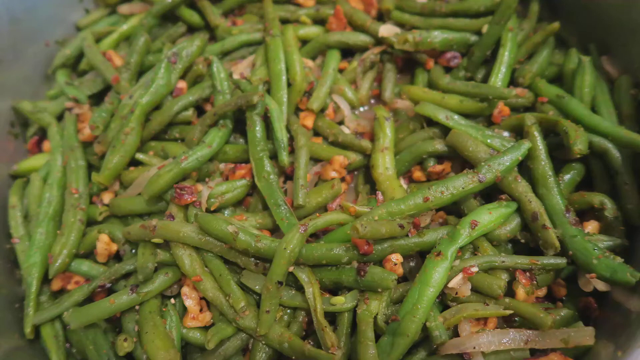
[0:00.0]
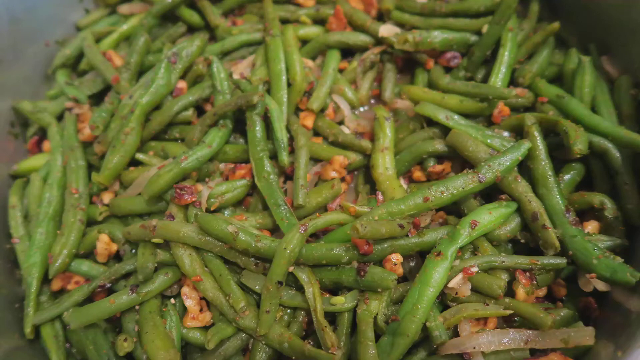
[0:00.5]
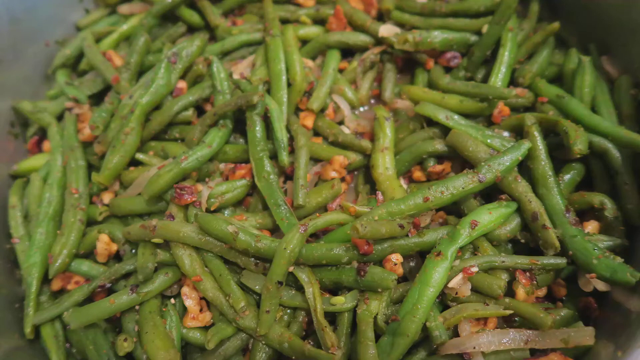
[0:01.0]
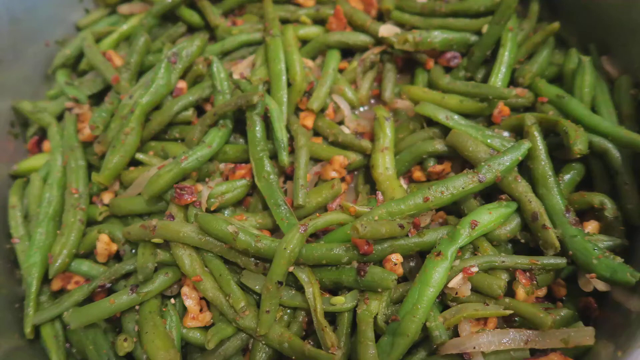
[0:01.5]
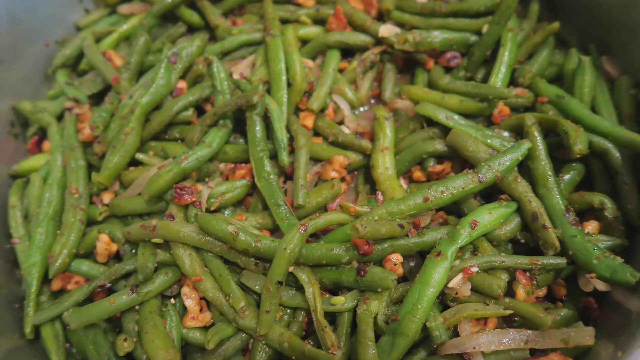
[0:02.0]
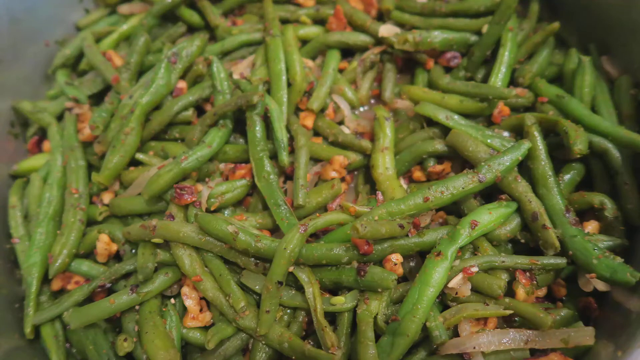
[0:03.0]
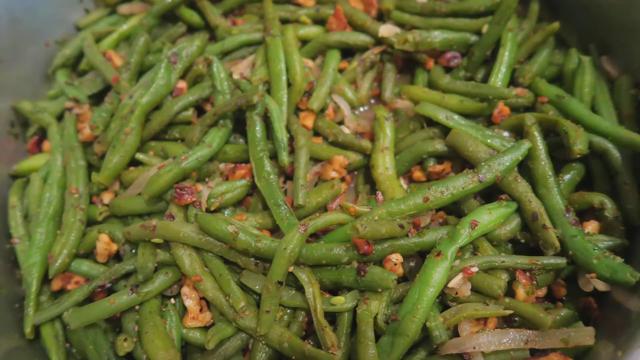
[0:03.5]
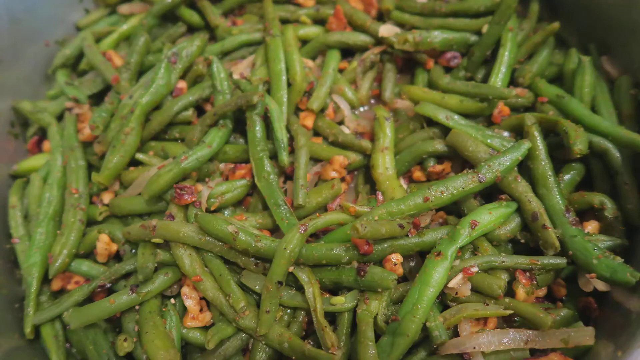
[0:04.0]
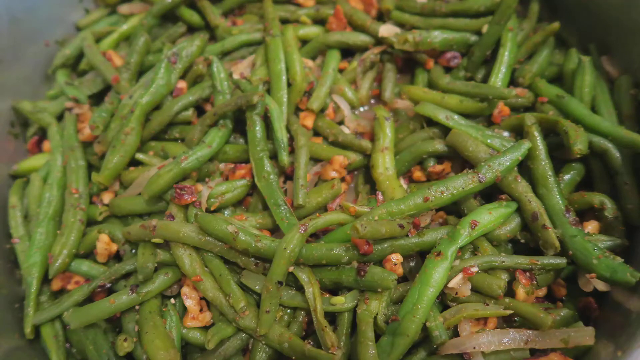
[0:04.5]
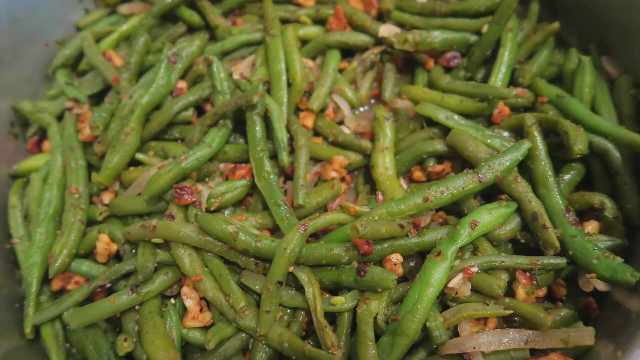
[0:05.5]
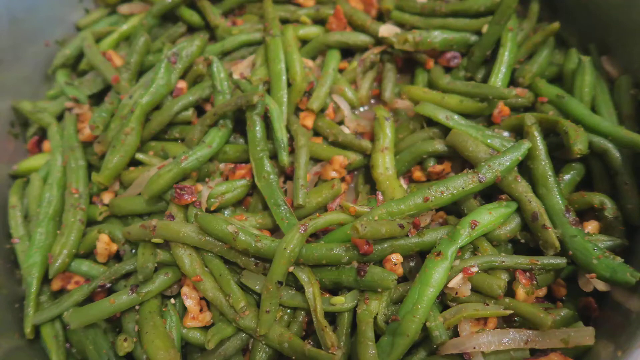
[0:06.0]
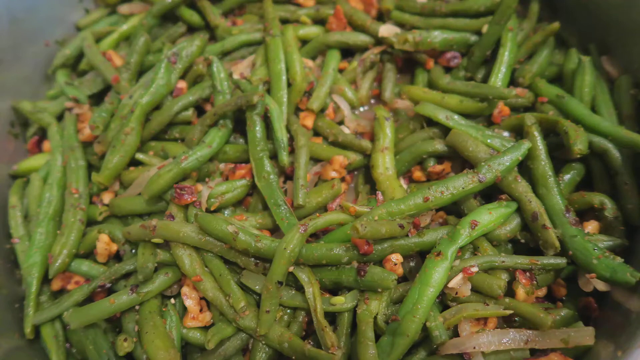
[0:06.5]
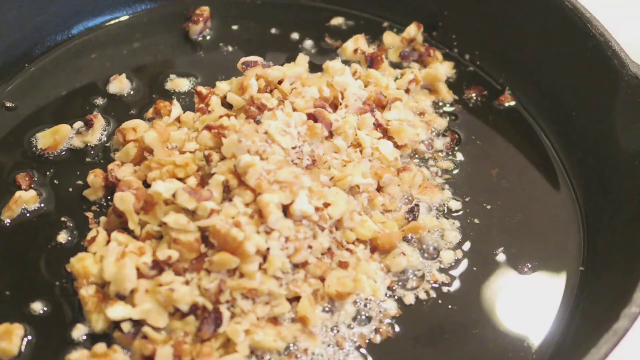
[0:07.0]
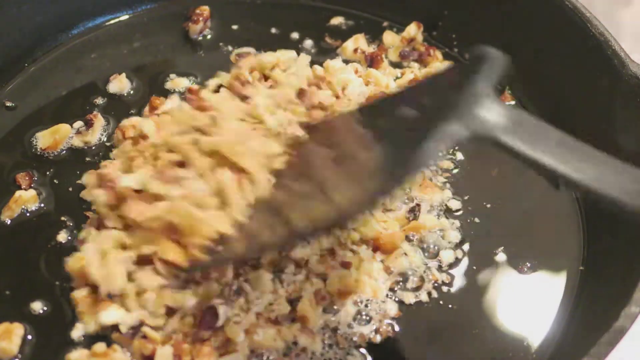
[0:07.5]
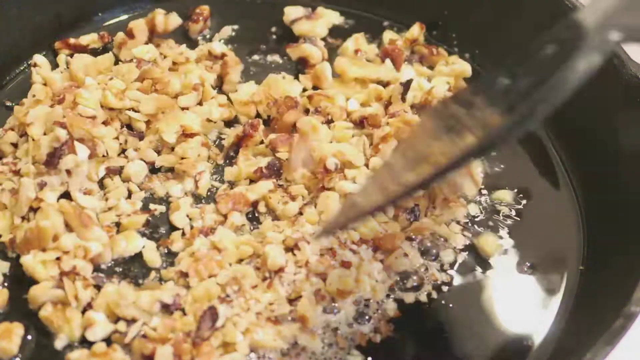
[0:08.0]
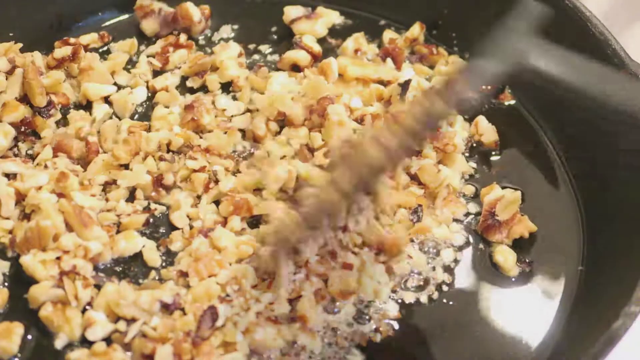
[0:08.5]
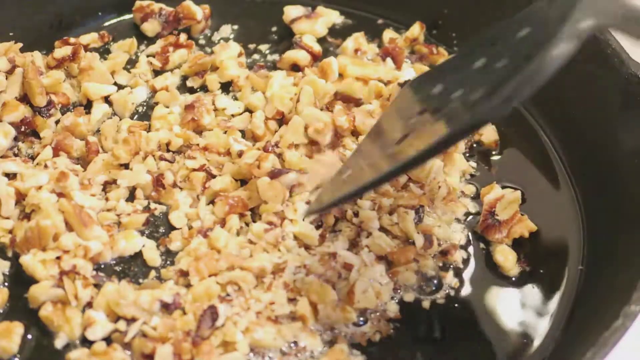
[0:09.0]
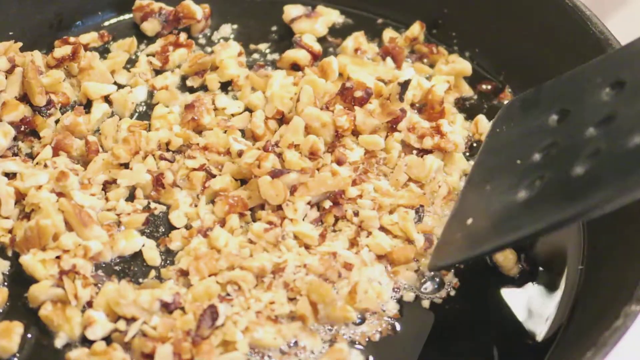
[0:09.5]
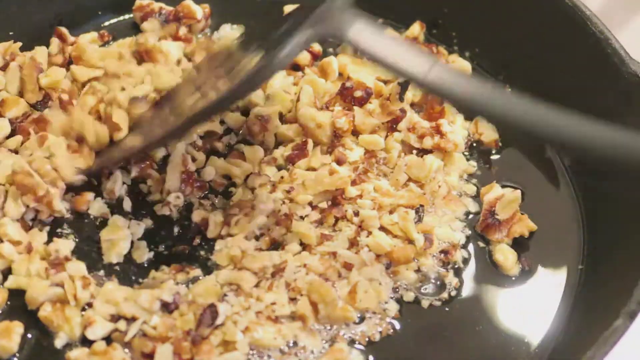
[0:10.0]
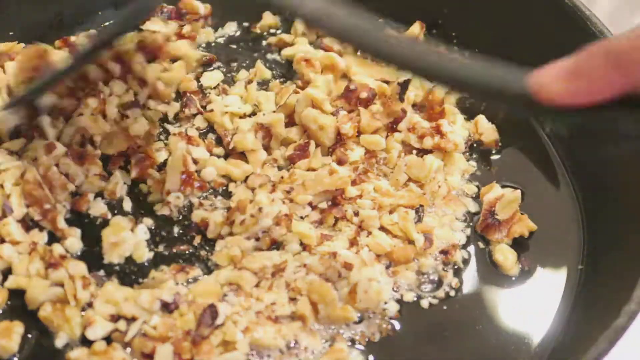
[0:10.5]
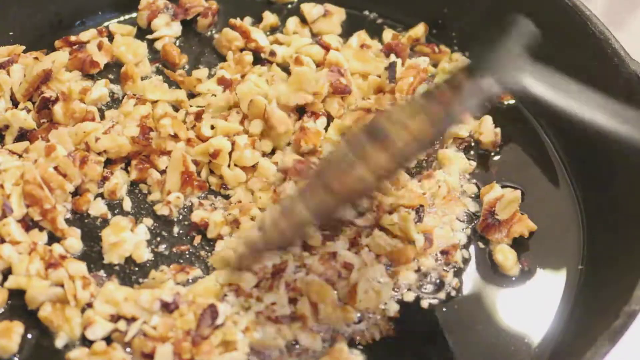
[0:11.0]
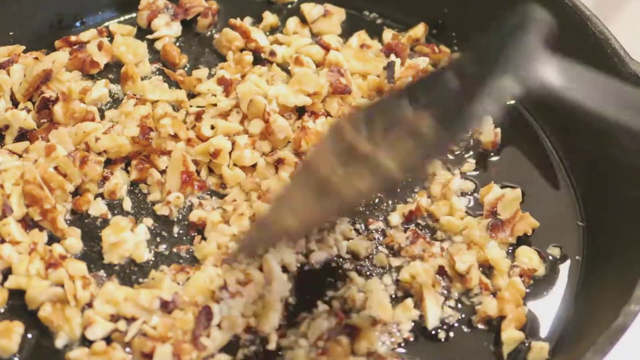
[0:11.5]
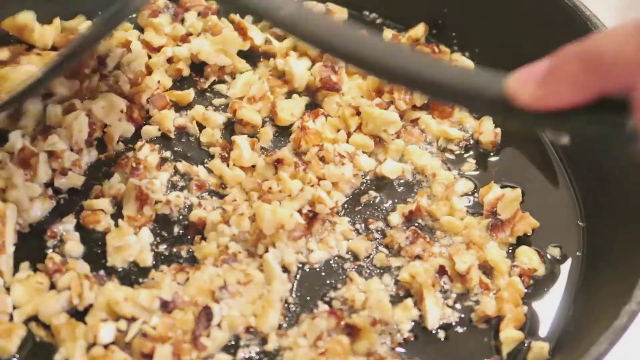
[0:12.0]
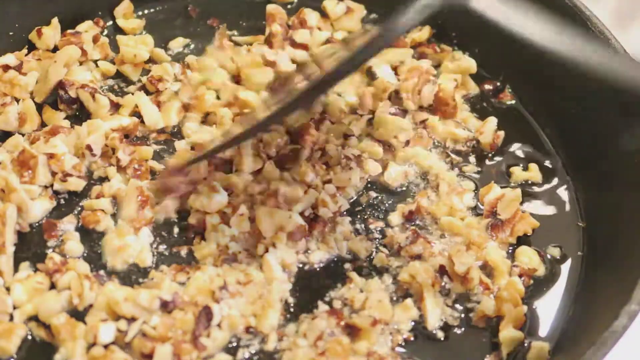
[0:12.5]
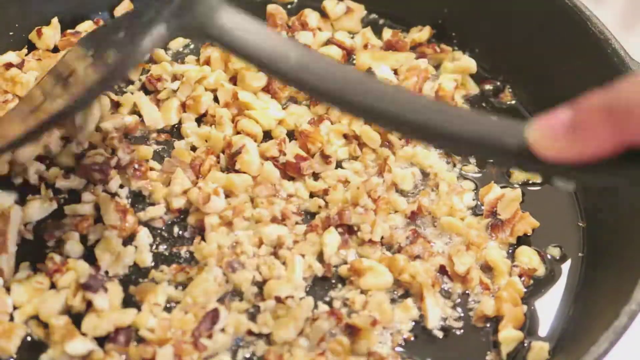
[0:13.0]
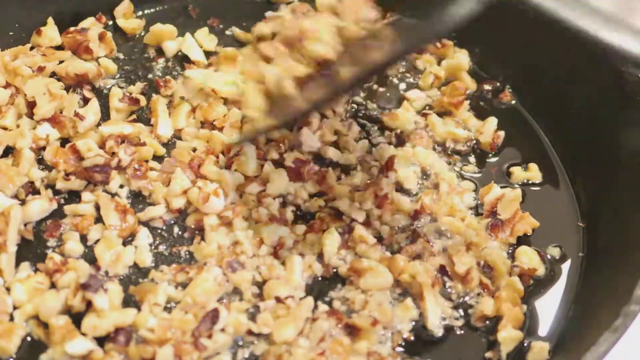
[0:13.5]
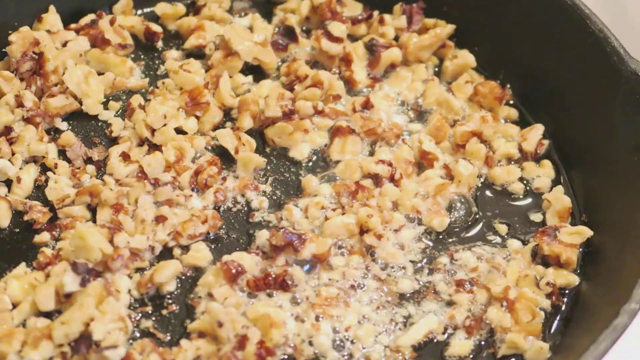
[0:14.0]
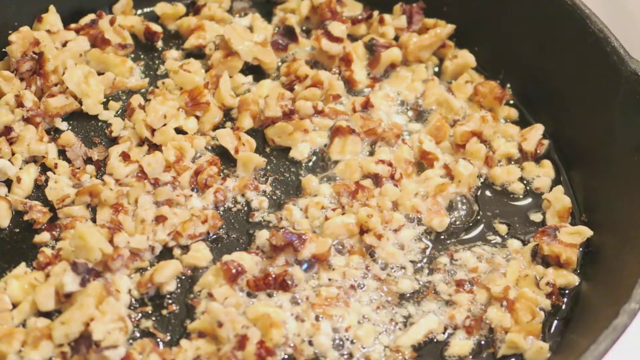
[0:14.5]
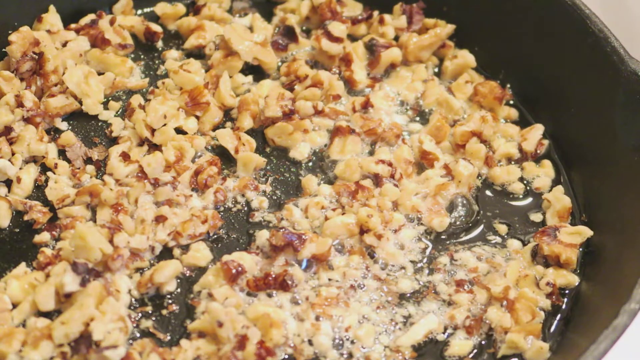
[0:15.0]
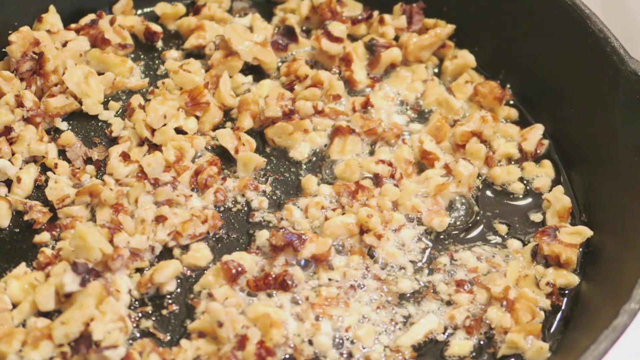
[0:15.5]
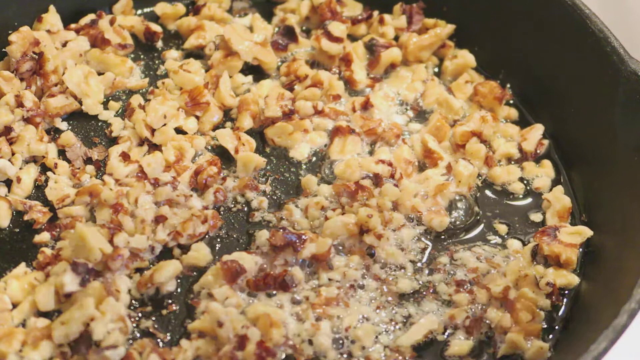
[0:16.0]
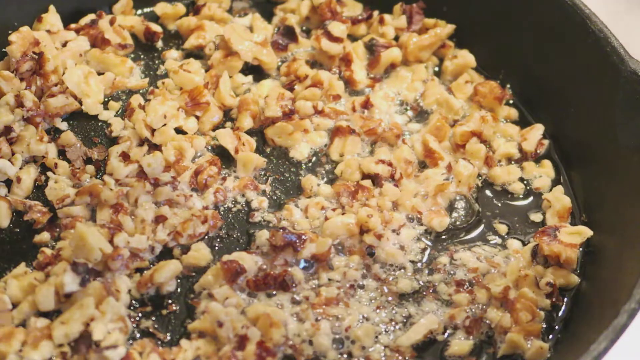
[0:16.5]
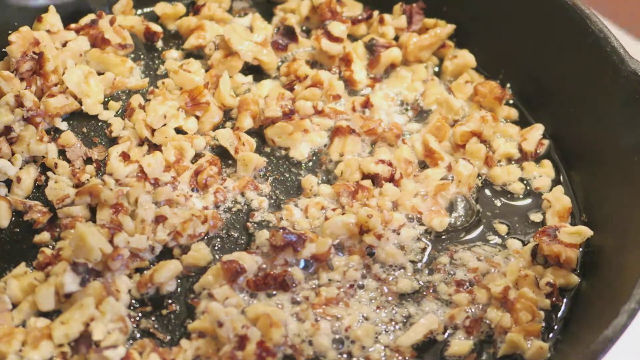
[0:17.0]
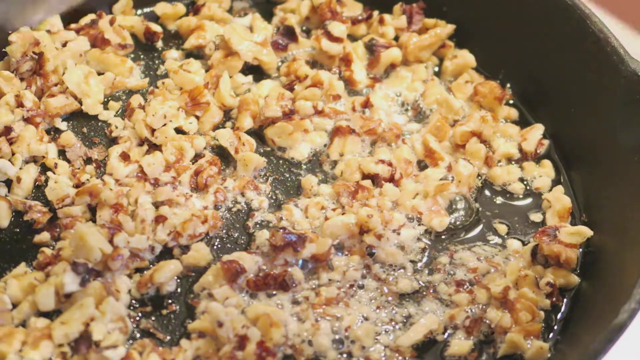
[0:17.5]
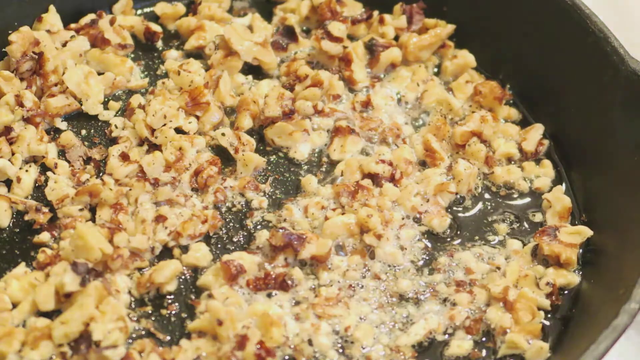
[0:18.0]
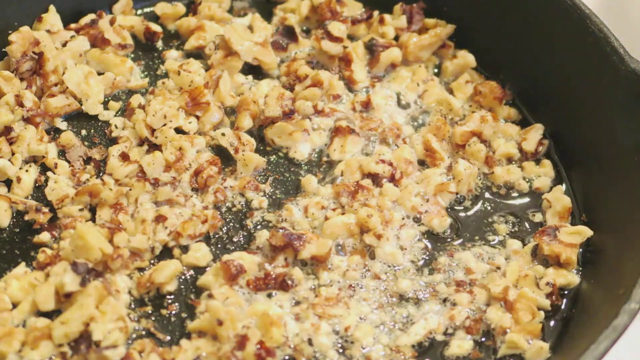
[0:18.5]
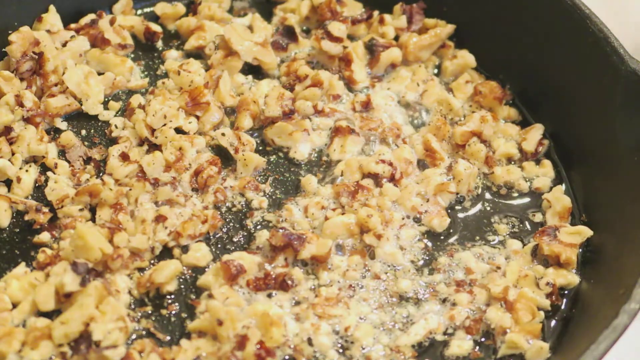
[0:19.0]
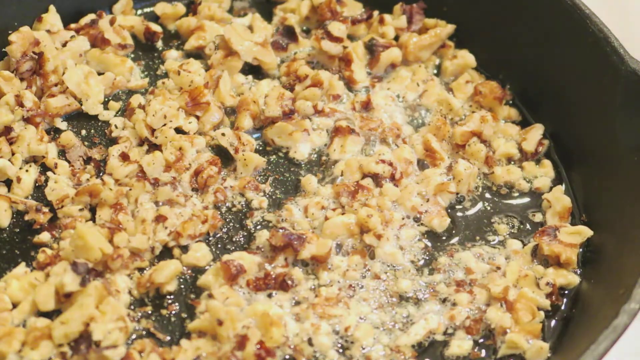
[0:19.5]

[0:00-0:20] Cooked salted green beans with garlic and chili flakes are in a pan; the green beans seem to have garlic and a few other ingredients mixed in with them. There is also a pan of fried nuts, and a pan in which chopped nuts or seeds are cooked in a dark liquid while a plastic utensil stirs them. Oil is put in with the chopped nuts, and the chopped nuts are cooked in the oil.